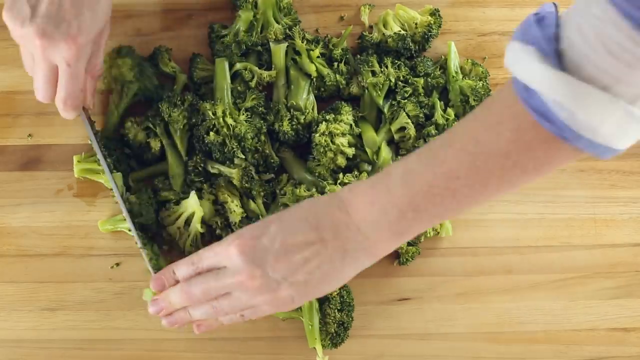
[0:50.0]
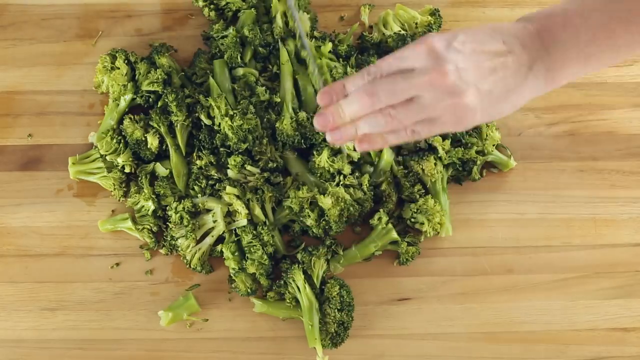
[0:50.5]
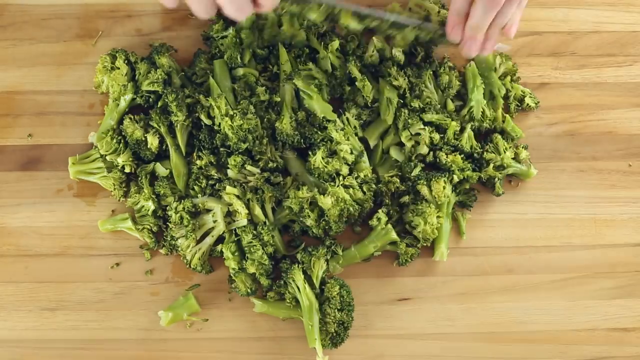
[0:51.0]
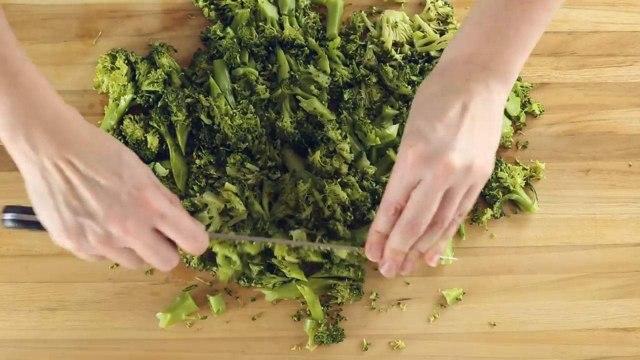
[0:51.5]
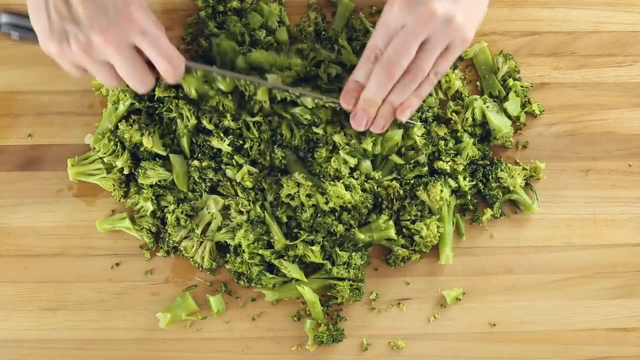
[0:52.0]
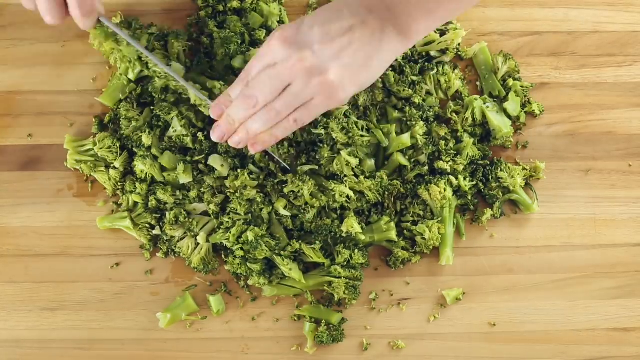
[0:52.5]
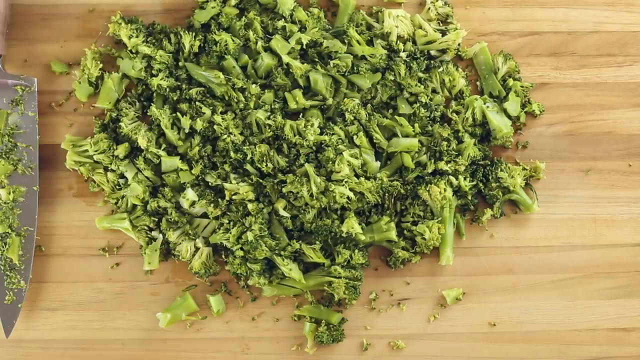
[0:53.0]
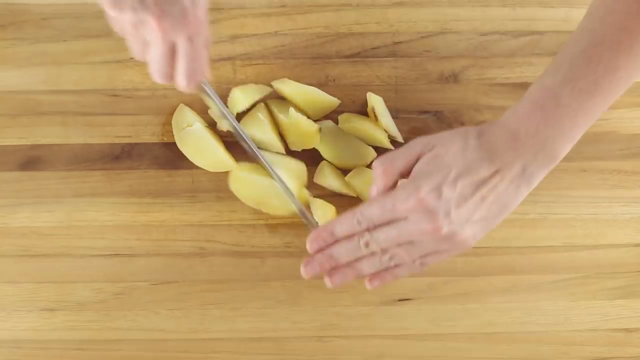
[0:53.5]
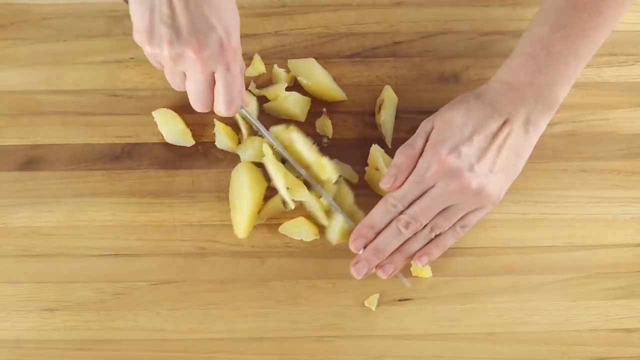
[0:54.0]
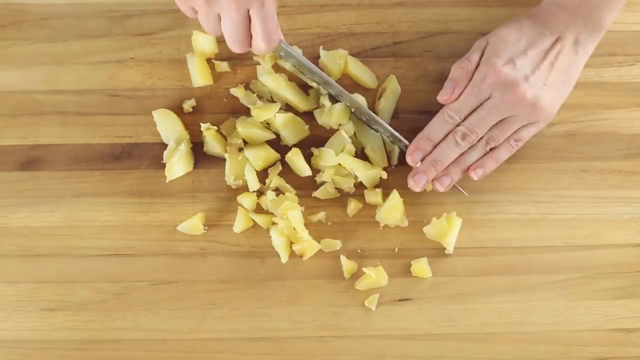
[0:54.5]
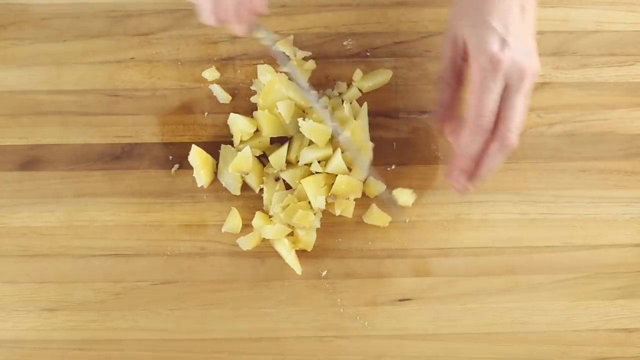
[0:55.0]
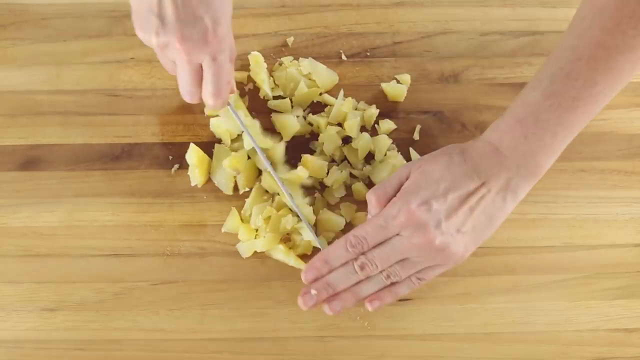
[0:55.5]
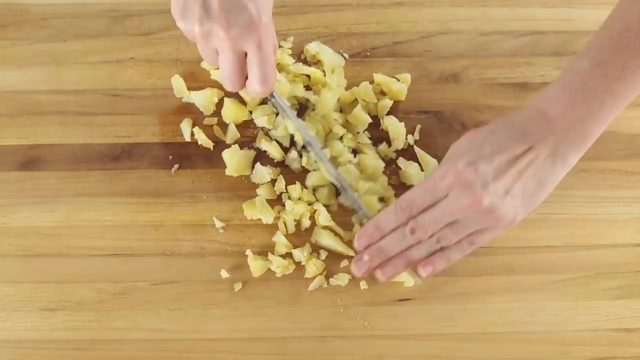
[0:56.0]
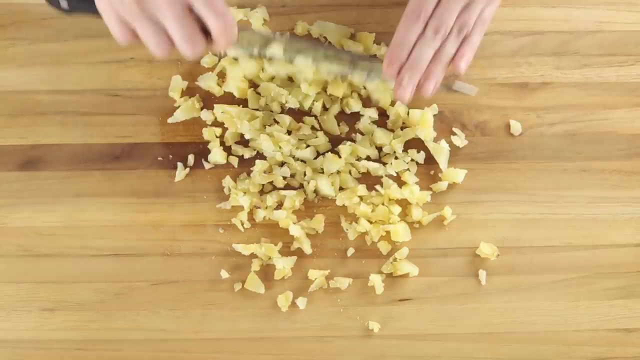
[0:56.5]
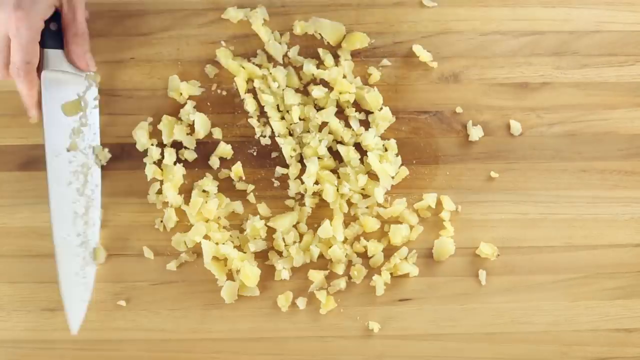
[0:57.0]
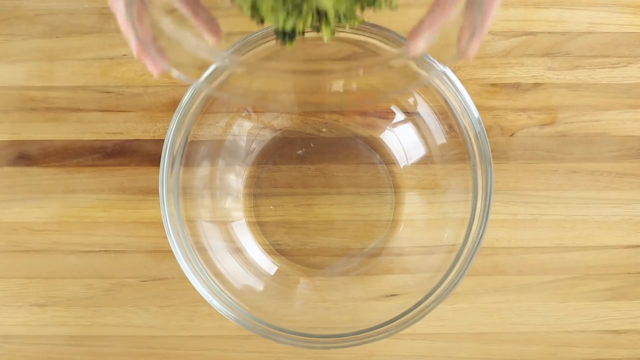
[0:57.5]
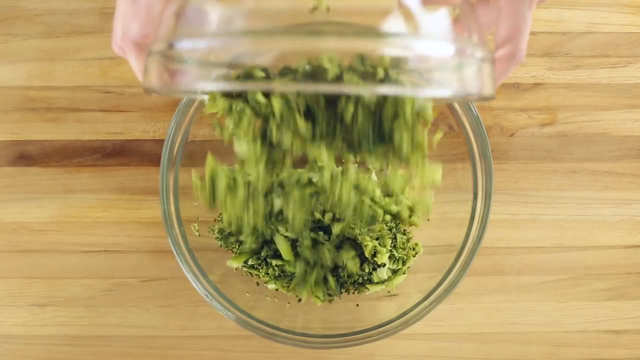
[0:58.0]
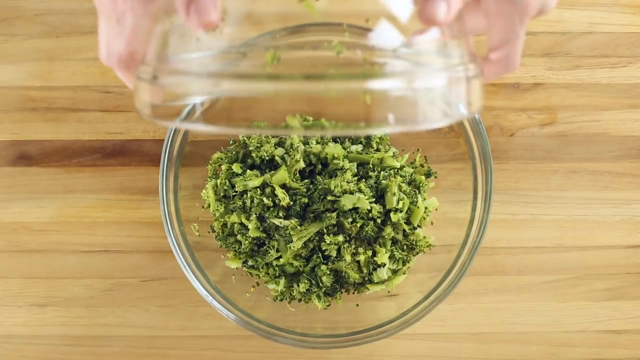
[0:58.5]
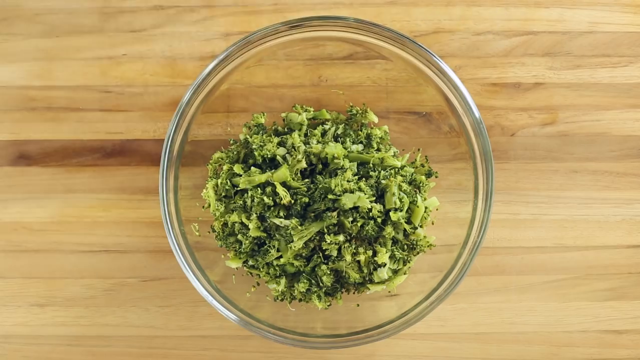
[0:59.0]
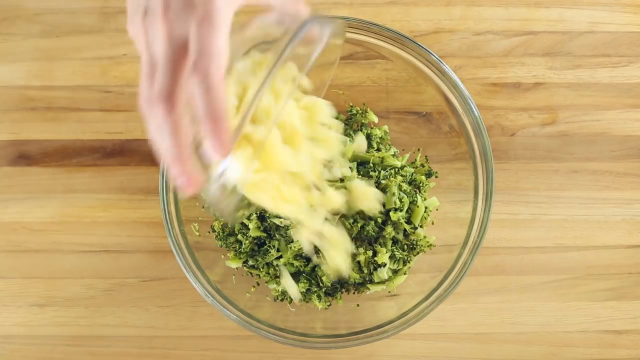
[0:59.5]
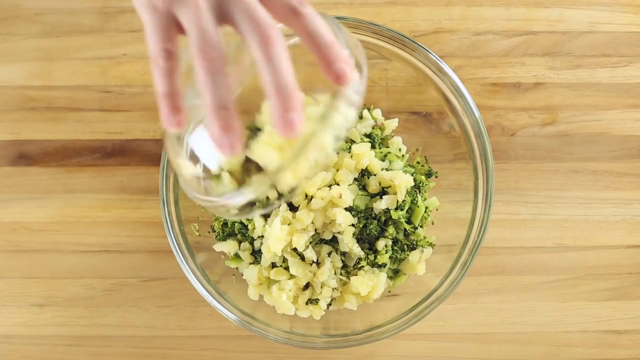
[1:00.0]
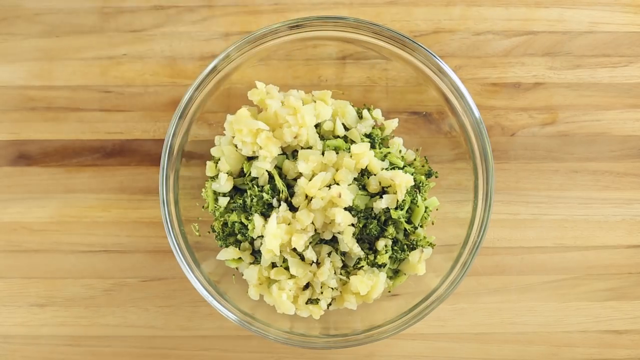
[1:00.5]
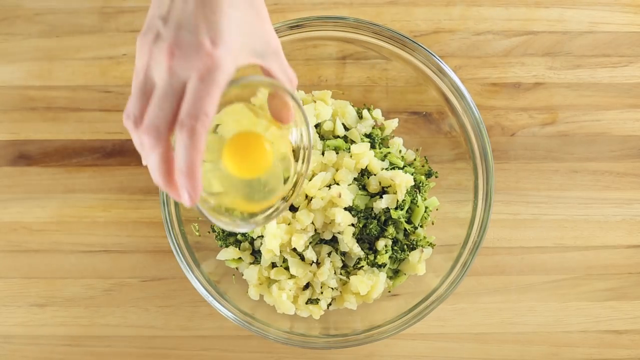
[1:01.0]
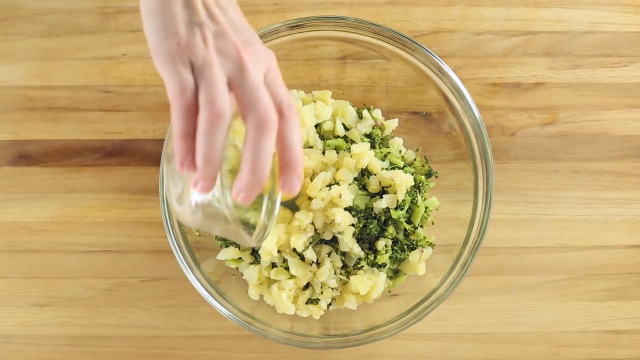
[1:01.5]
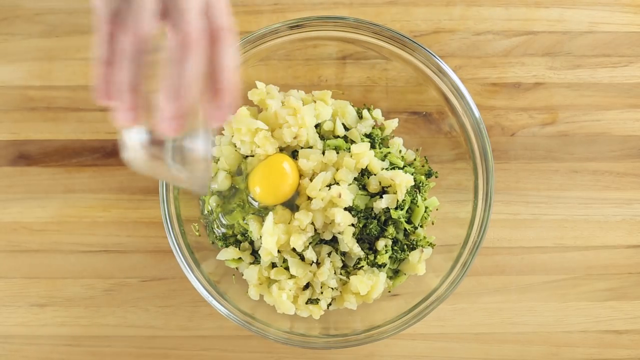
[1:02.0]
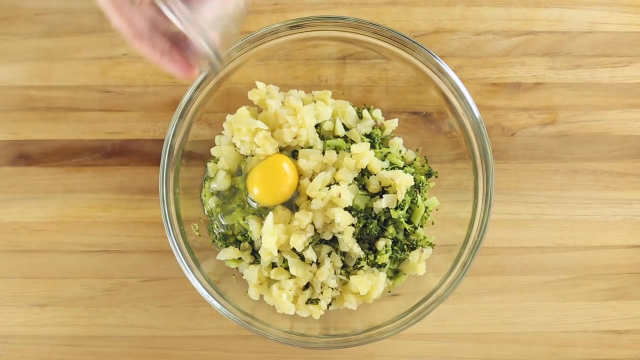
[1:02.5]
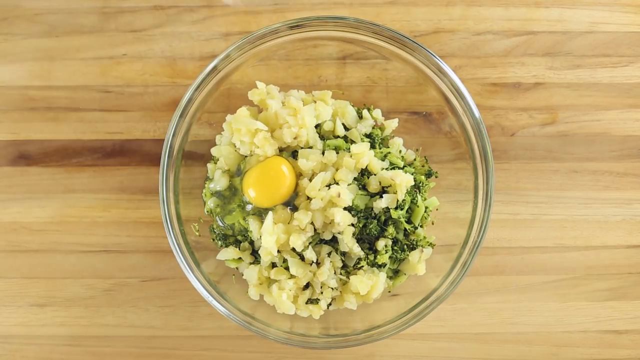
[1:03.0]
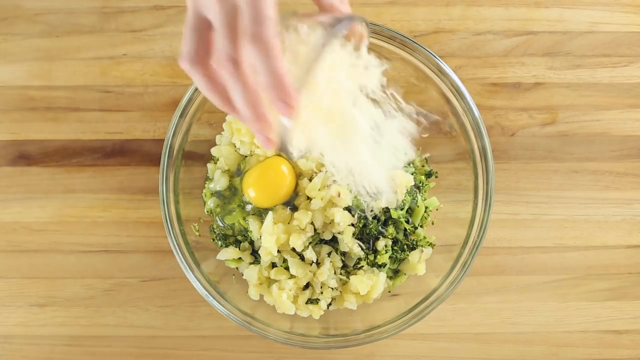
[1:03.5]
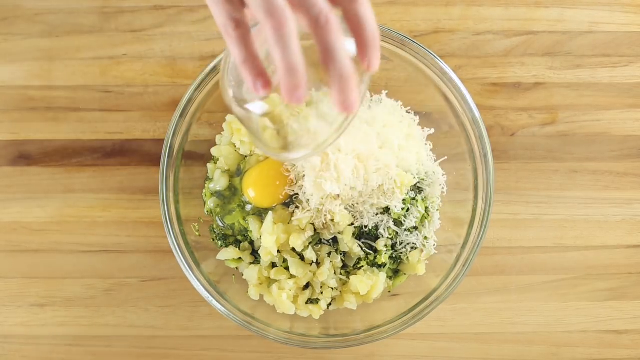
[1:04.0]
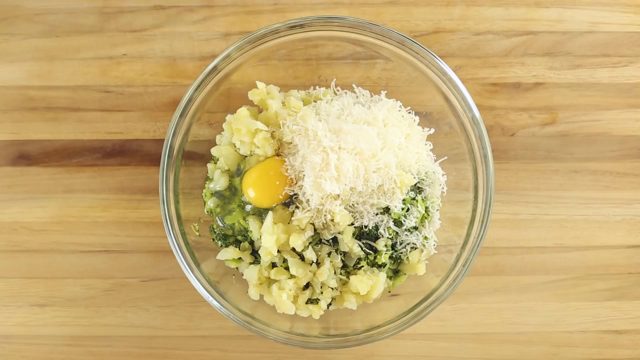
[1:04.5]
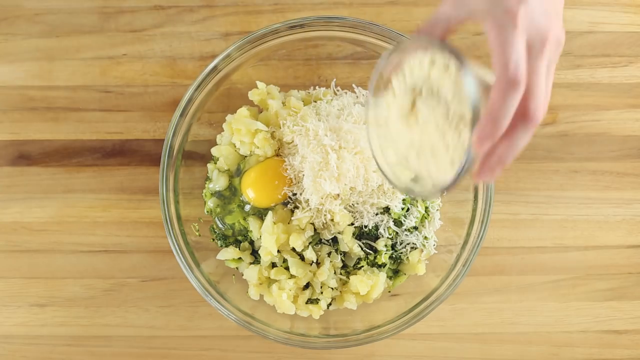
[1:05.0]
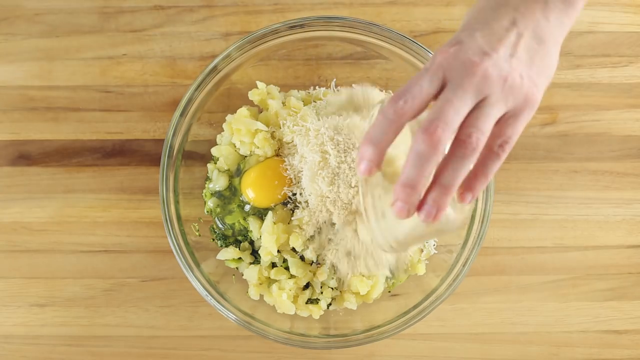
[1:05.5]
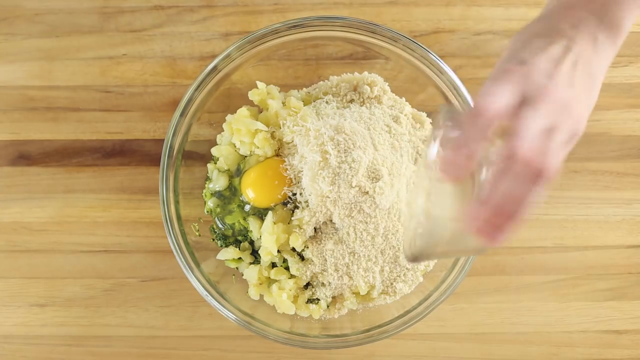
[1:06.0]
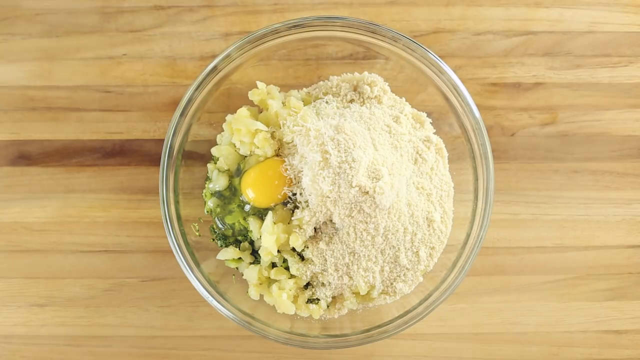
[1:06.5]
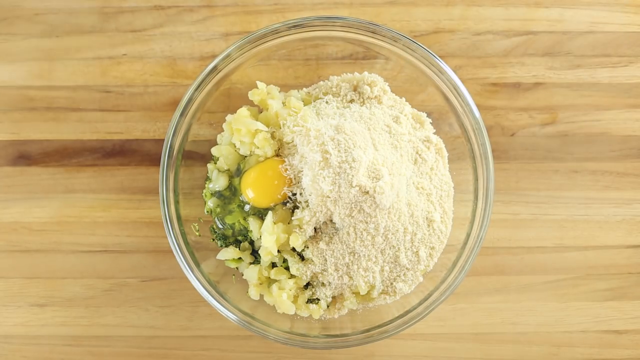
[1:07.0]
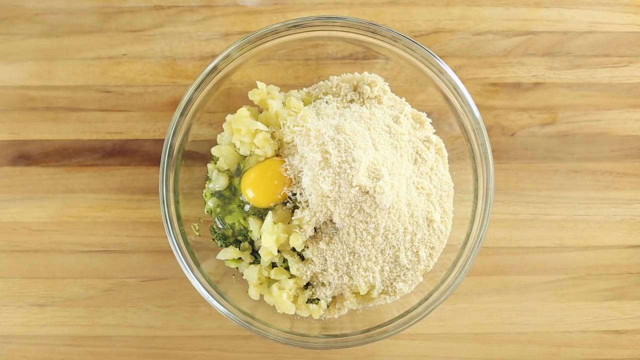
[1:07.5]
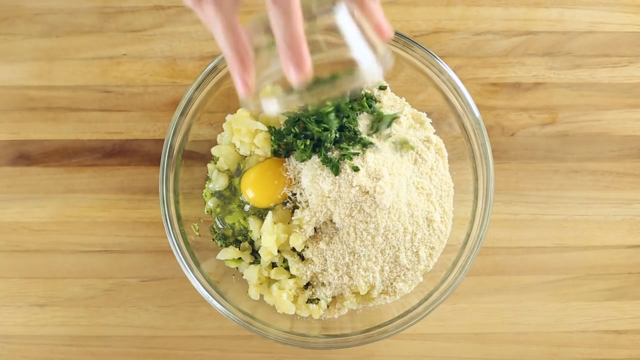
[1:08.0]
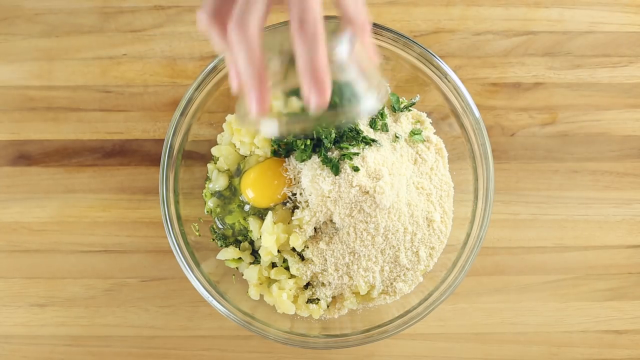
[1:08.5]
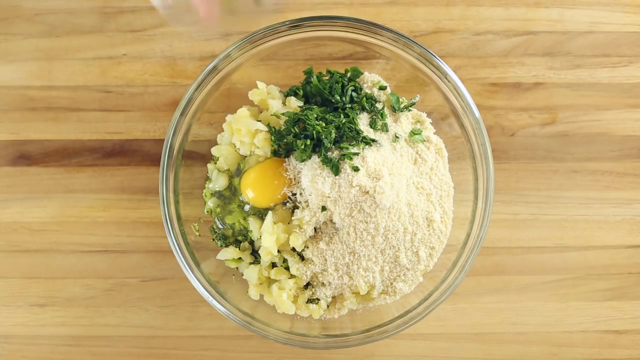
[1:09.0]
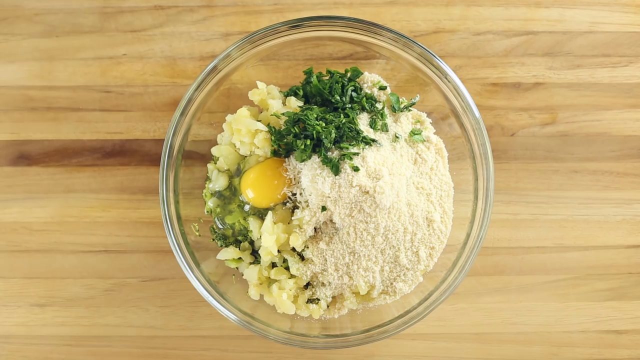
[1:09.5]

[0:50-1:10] A pile of steamed broccoli is on a light brown wooden tabletop. In a close-up, a pair of hands holds a knife, one hand on the handle and the other on the top of the far end of the blade, and chops the broccoli into small pieces, moving the knife left to right, then top to bottom, bottom to top and left to right again until the broccoli is in tiny bits. The screen changes to a few slices of peeled potato that looks boiled or steamed, which they chop the same way, occasionally stopping to clear the small potato chunks off the knife with a finger, until it is in small diced pieces. A large, empty, clear bowl is on the table, and the hands dump a large clear bowl of the chopped broccoli into it, then a smaller clear bowl of the chopped potatoes on top of the broccoli. They add a small clear bowl holding one raw egg with the yolk, then another small clear bowl full of what looks like thinly shredded white cheese, then another bowl of what looks like more white cheese with a finer, powdery texture, and then a bowl of what looks like chopped greens.